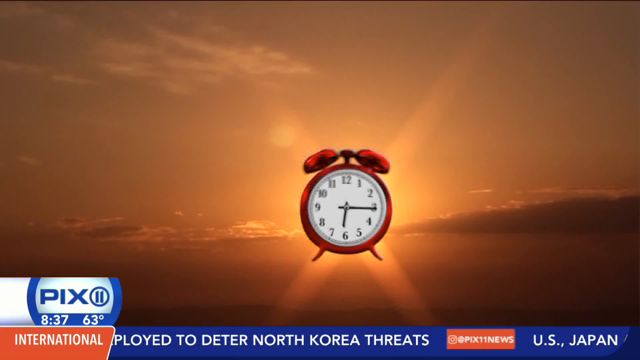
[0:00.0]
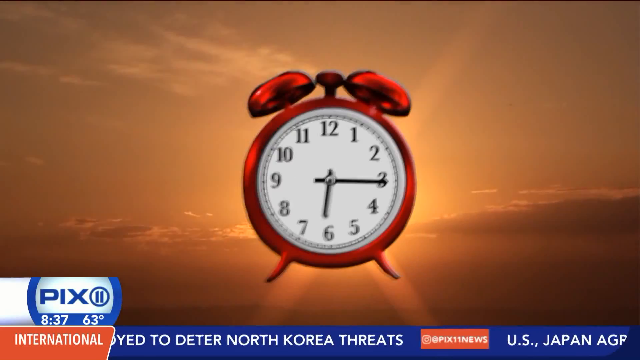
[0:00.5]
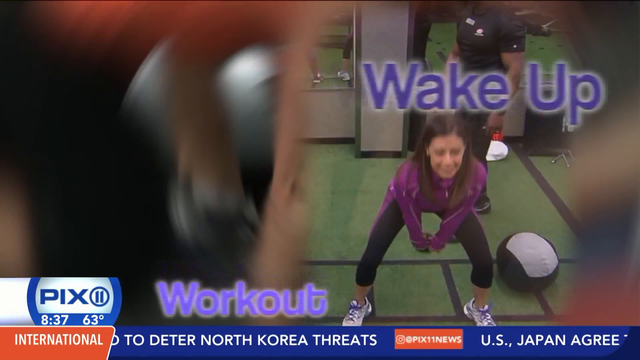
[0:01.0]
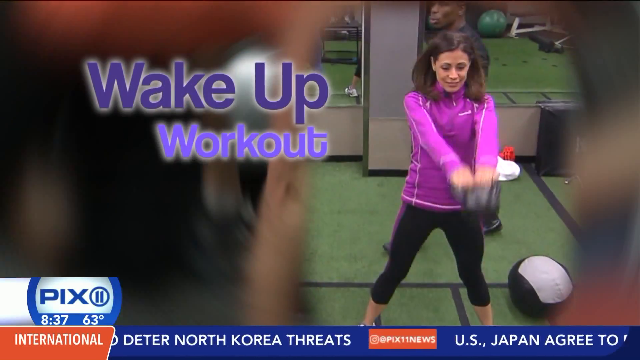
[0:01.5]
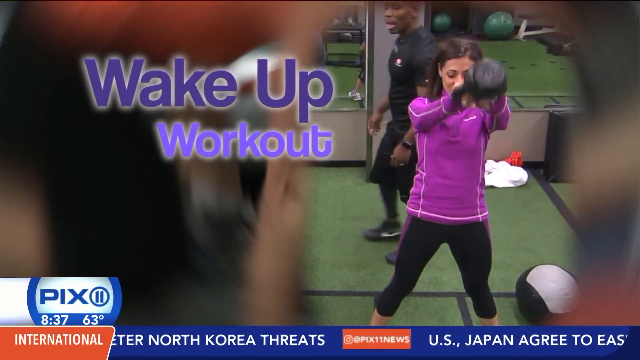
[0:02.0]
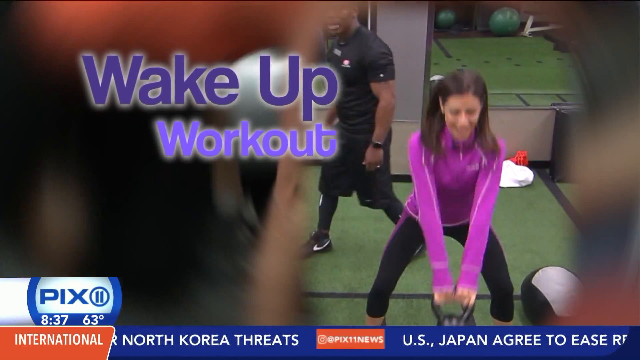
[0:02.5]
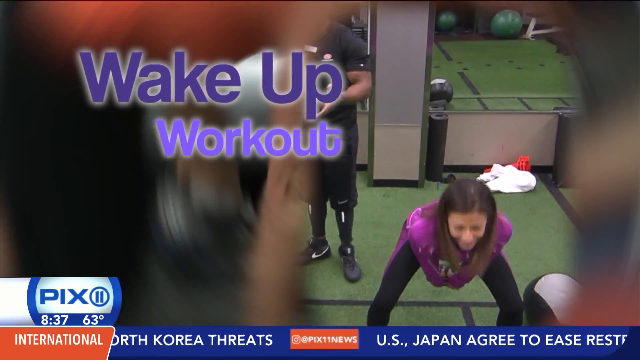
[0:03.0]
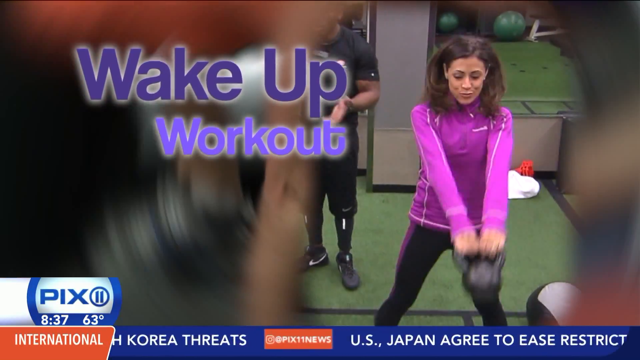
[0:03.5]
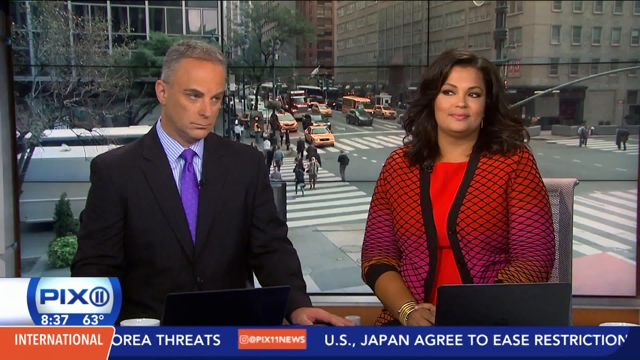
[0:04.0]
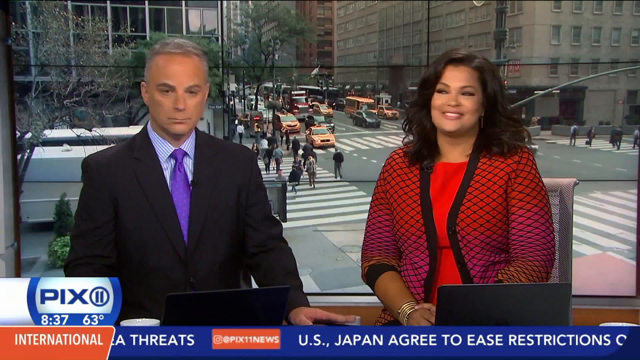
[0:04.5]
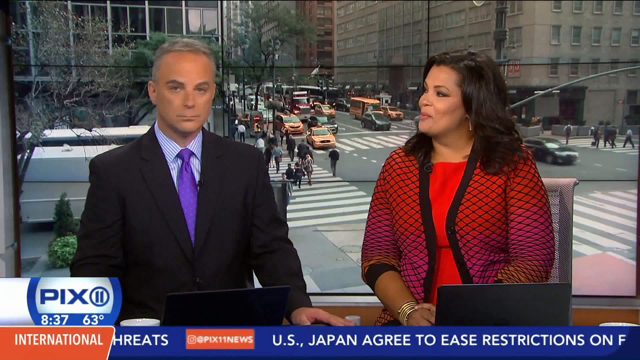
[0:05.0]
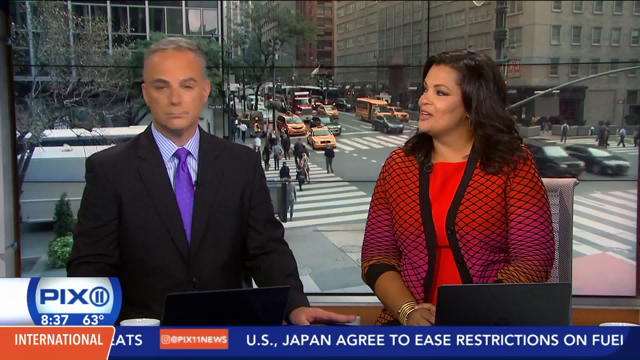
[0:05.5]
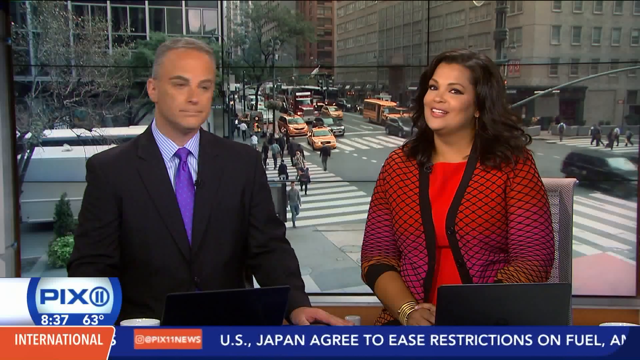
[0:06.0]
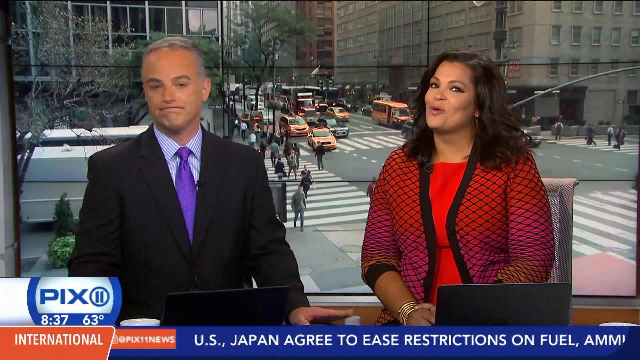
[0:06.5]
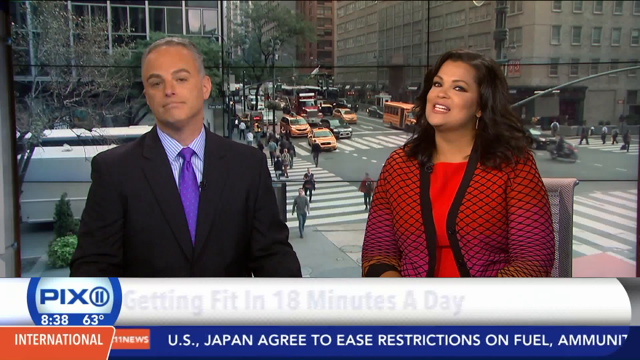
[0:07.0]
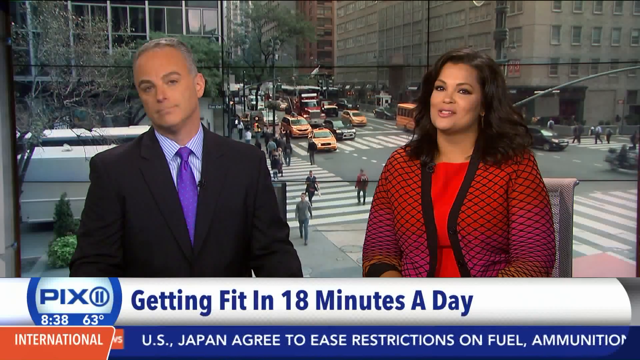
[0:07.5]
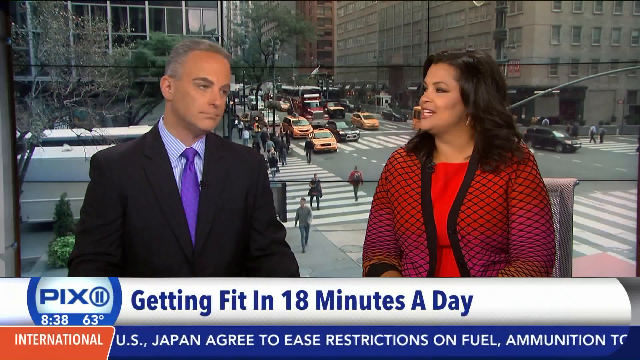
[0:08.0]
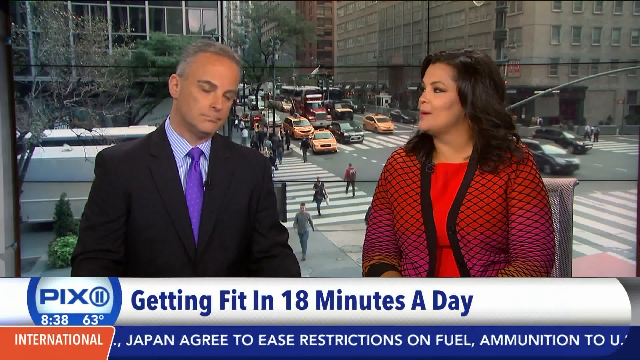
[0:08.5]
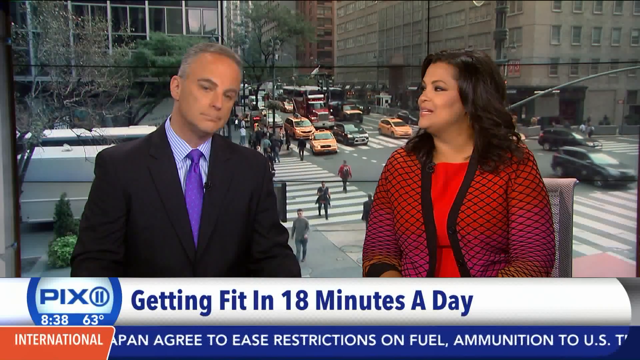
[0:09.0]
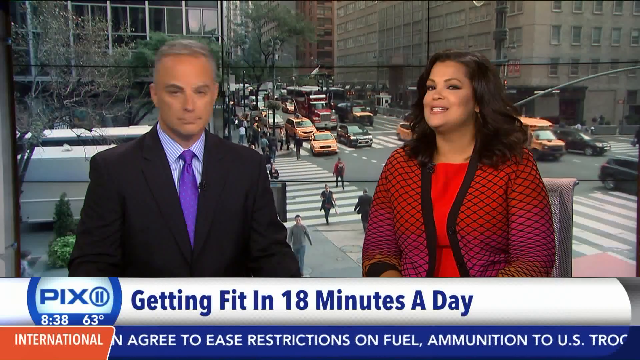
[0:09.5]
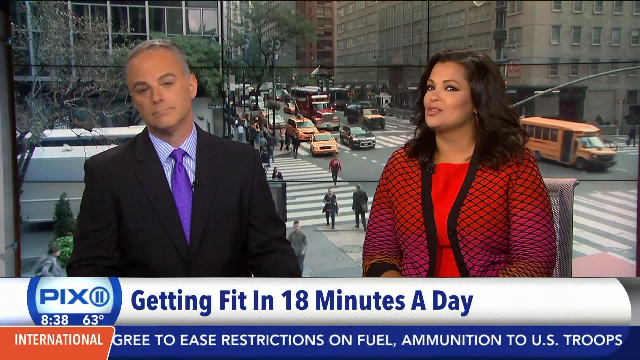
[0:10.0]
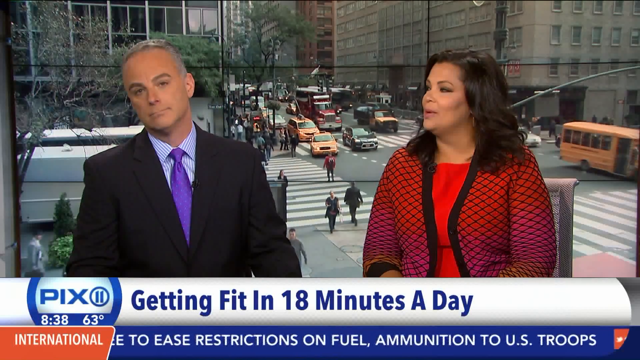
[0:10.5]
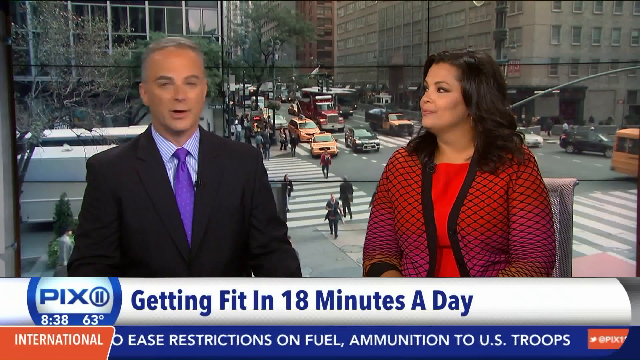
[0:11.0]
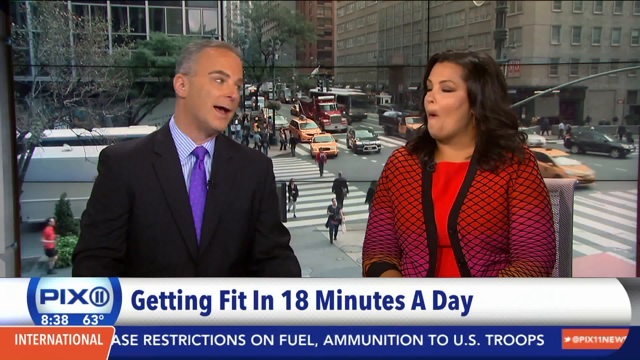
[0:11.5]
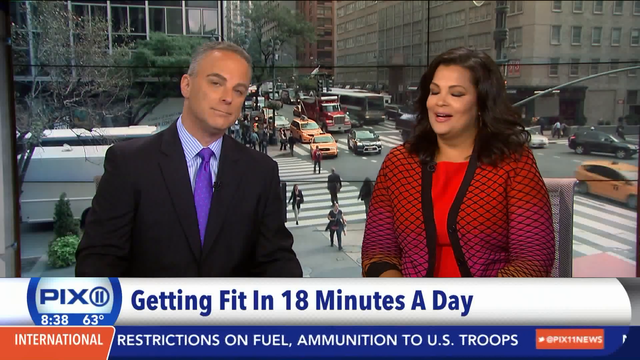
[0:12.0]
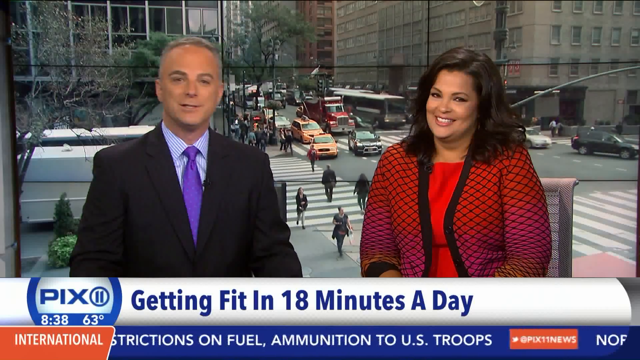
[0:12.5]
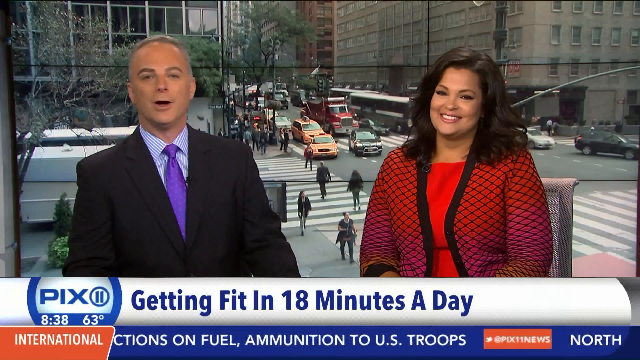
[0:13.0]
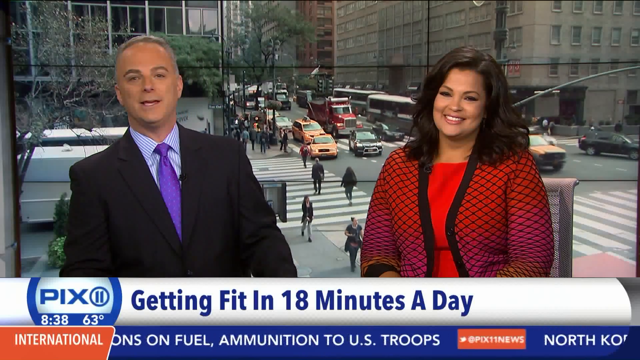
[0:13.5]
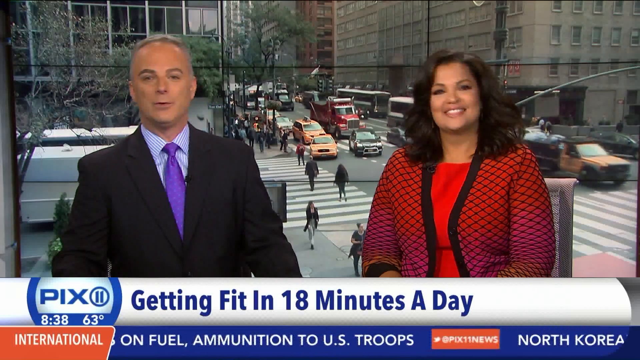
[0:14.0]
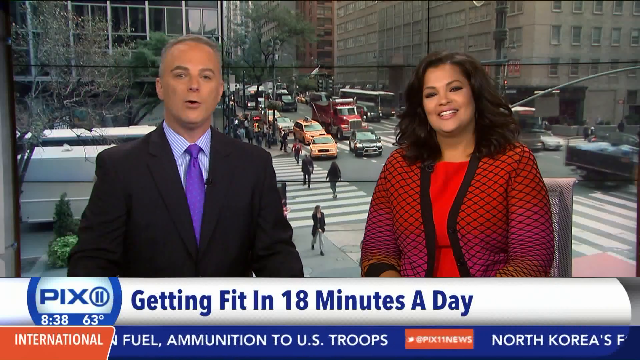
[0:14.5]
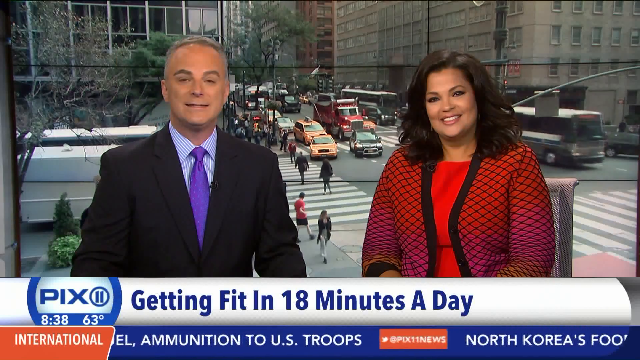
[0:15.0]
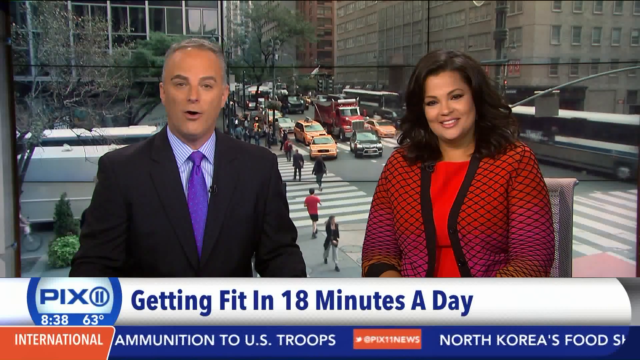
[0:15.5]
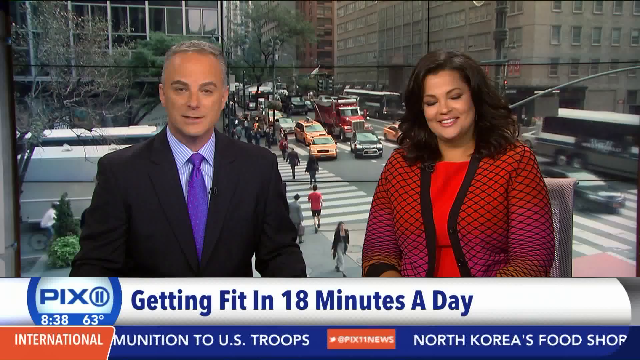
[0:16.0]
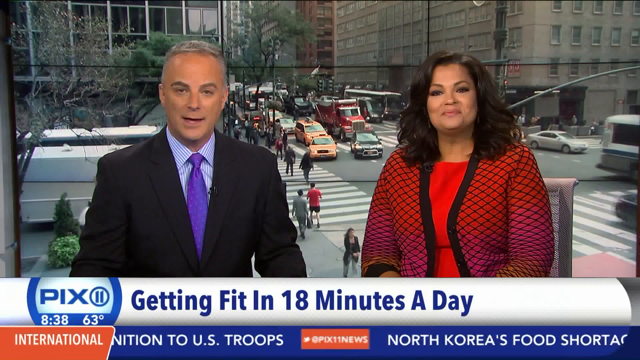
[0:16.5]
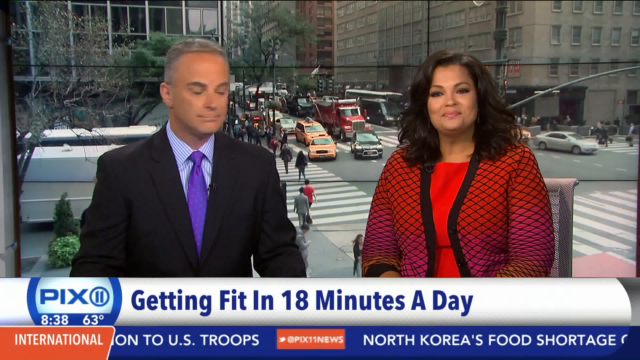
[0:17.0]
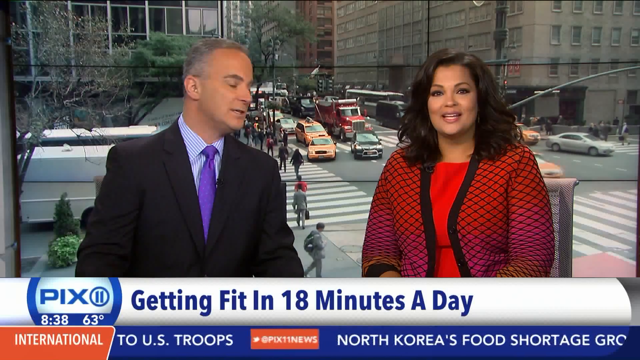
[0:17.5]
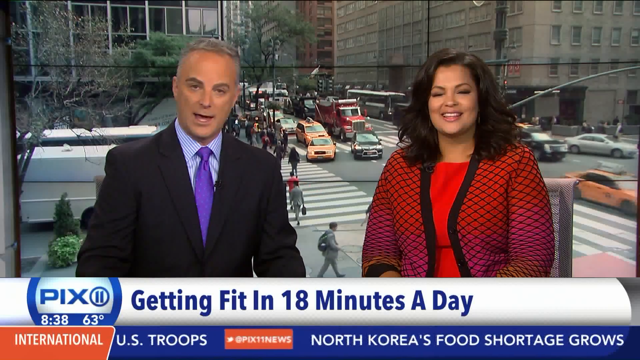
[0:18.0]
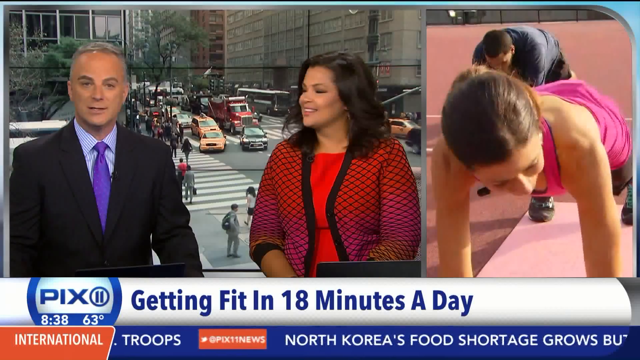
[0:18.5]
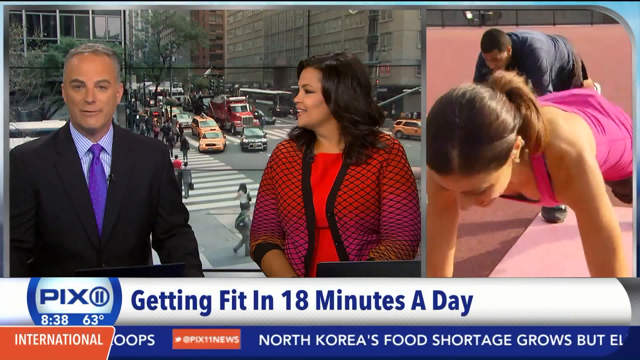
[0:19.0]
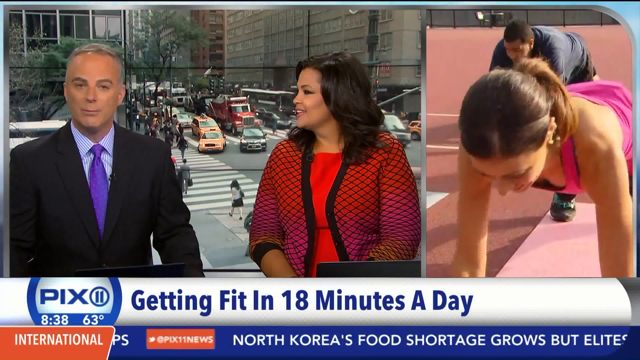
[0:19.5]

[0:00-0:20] A red alarm clock rings and appears bigger and bigger against a background of a sea and a sunset. A lady in a pink suit and leggings then appears doing gymnastics, with the writing "Wake Up Workouts". The scene moves to a TV studio with a man in a jacket and purple tie and a woman of Spanish origin in a red dress; behind them there is probably a metropolis like New York. A text appears that reads "Getting fit in 18 minutes a day" while the man waves his head as if he were dancing. Footage follows of other people doing gymnastics, apparently on the topic of physical activity in the morning, and the woman seen earlier appears again and seems to be doing push-ups.